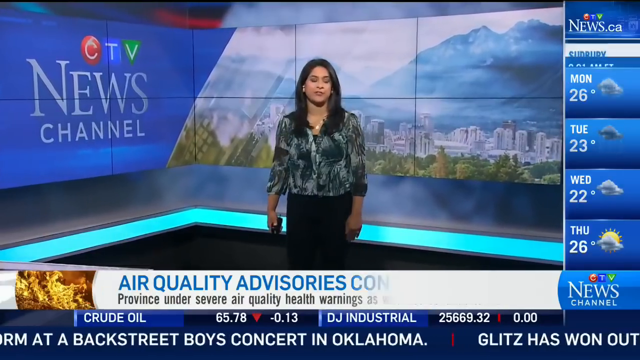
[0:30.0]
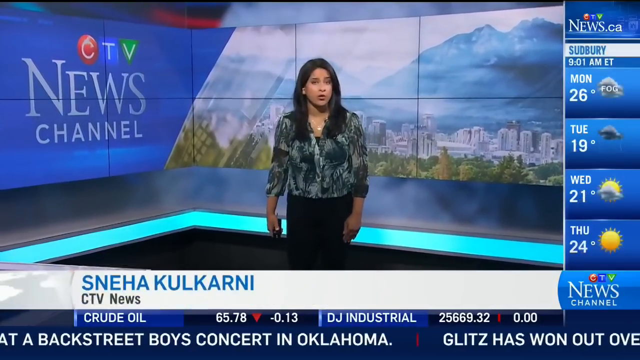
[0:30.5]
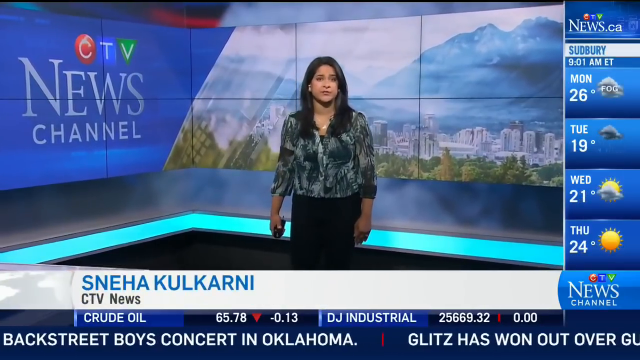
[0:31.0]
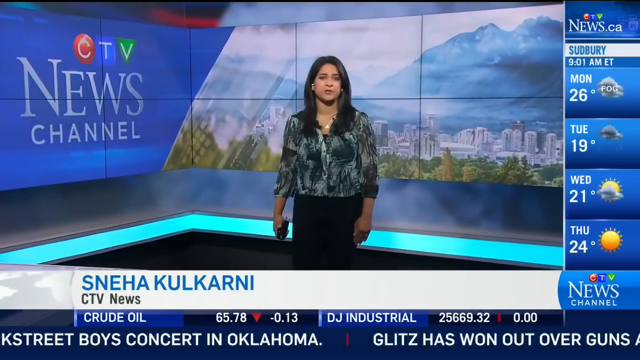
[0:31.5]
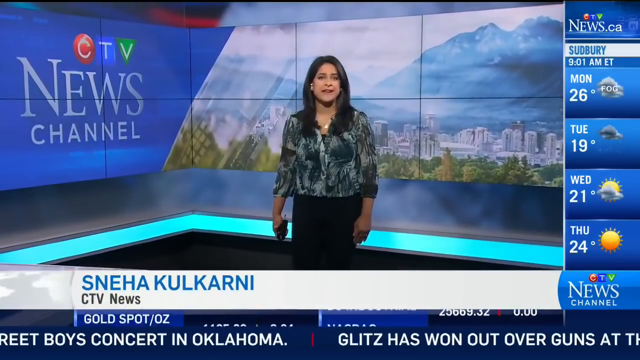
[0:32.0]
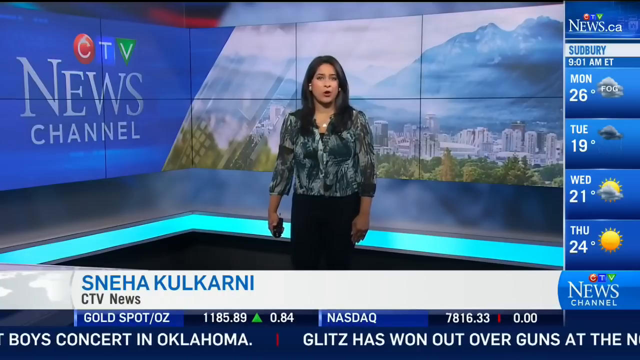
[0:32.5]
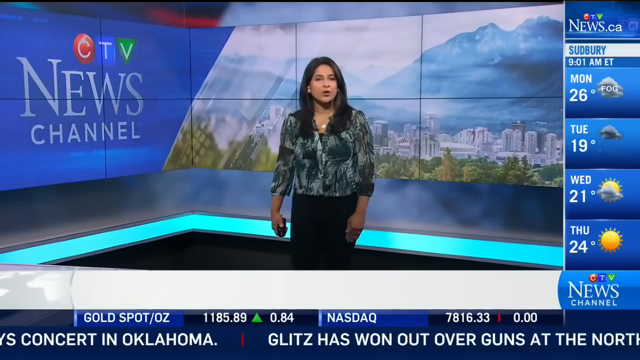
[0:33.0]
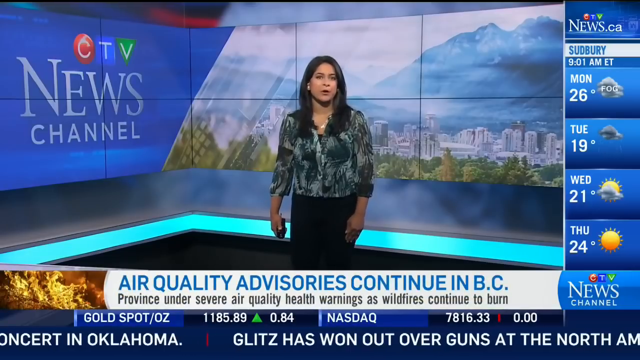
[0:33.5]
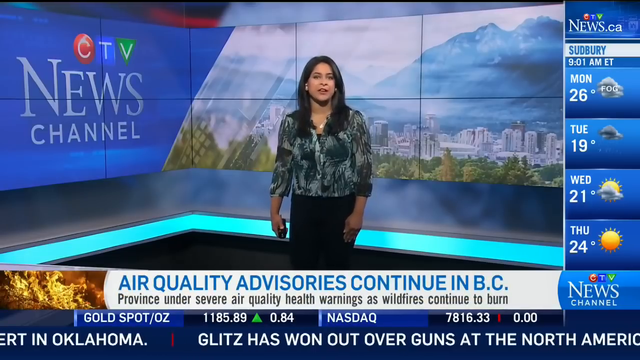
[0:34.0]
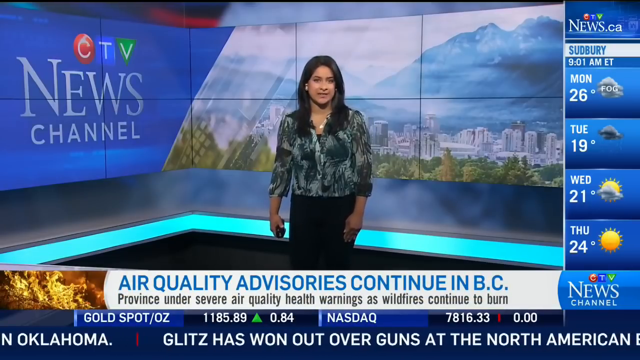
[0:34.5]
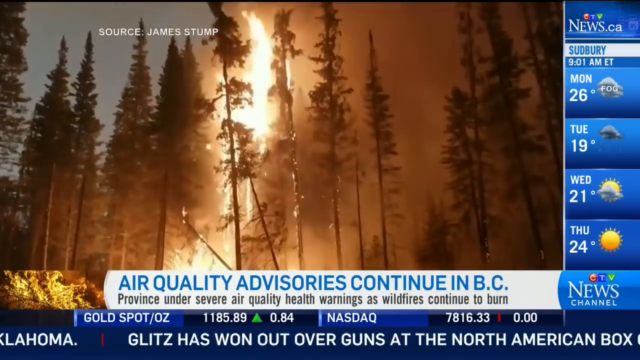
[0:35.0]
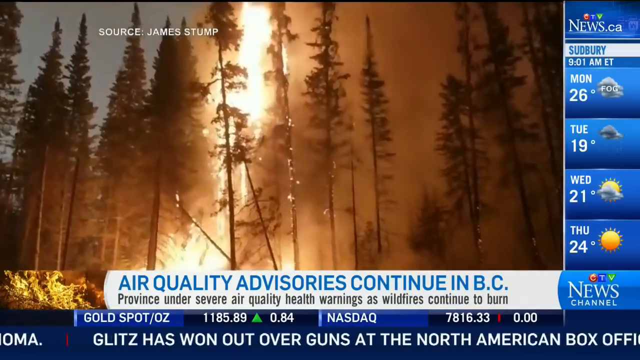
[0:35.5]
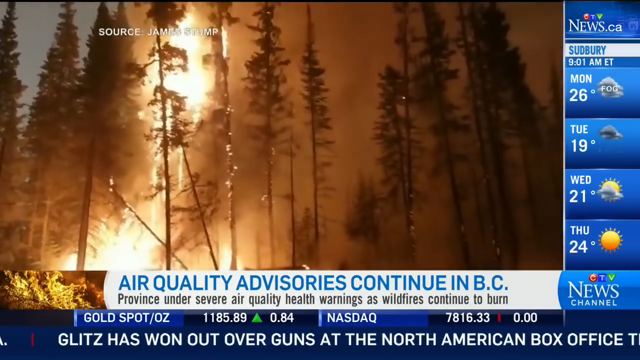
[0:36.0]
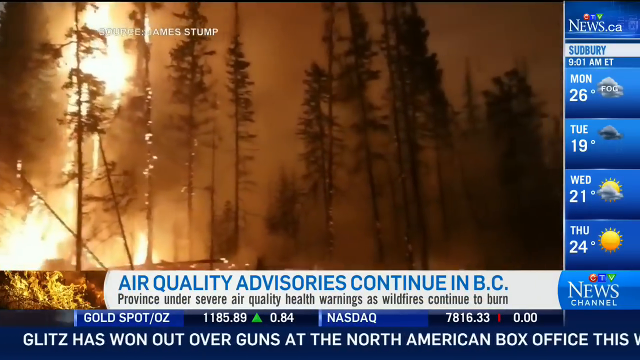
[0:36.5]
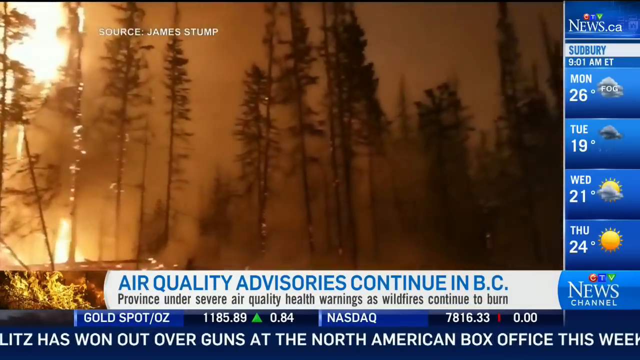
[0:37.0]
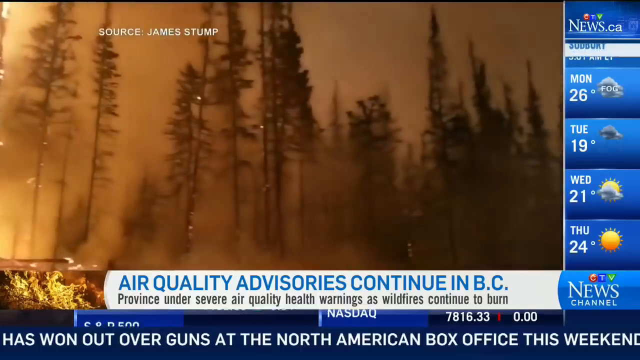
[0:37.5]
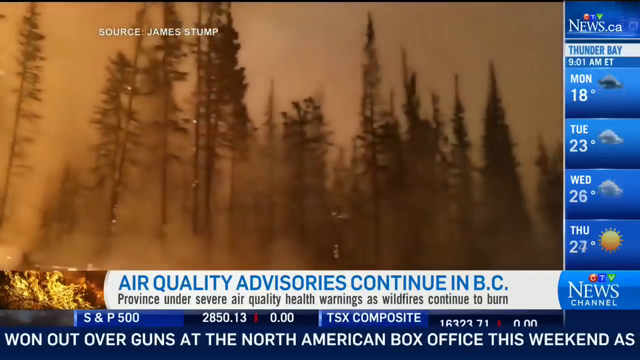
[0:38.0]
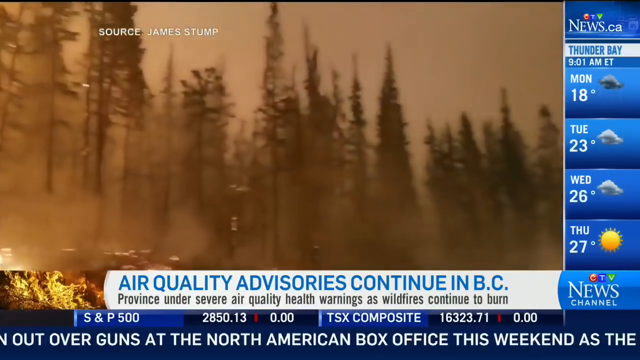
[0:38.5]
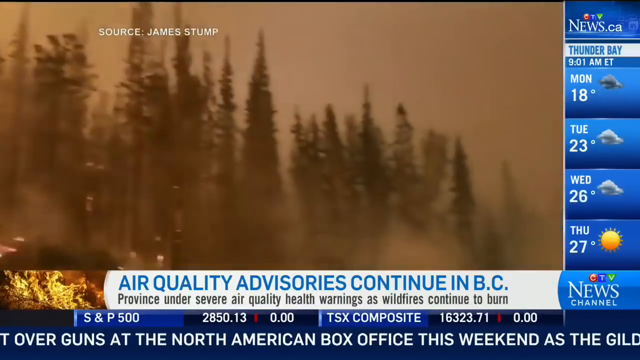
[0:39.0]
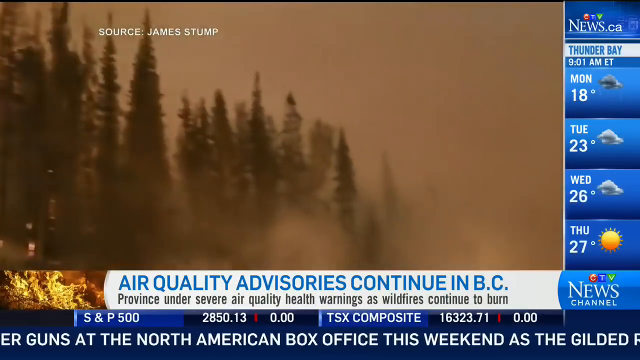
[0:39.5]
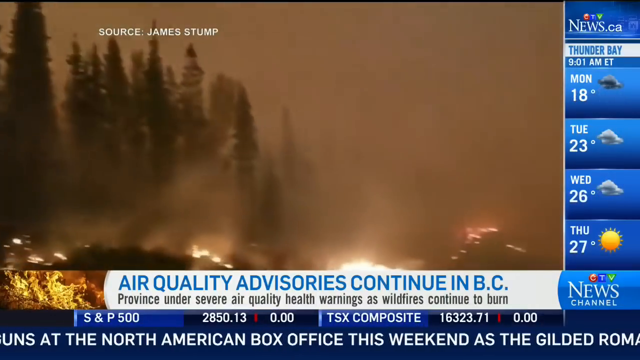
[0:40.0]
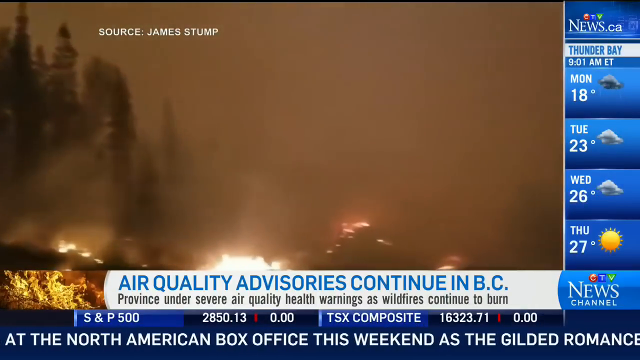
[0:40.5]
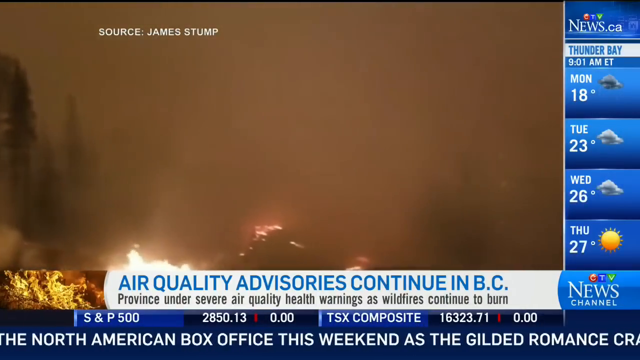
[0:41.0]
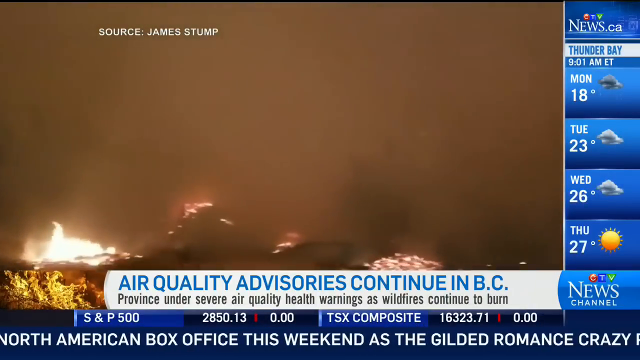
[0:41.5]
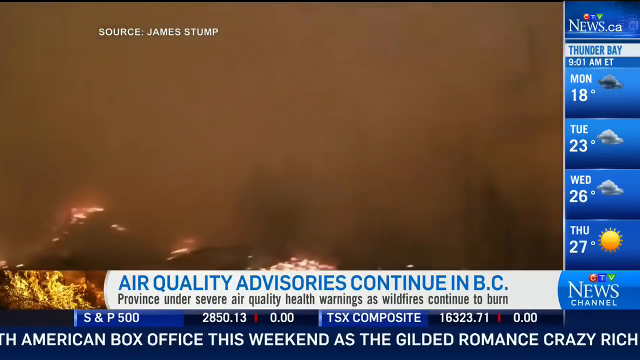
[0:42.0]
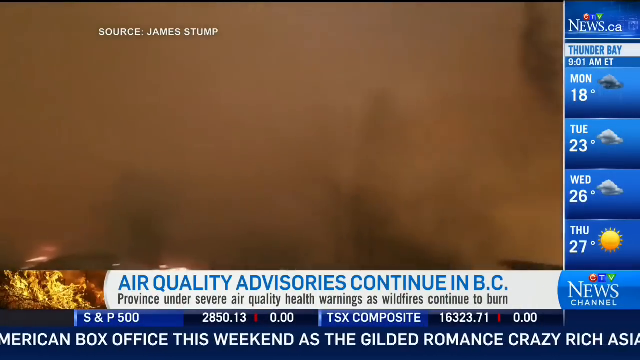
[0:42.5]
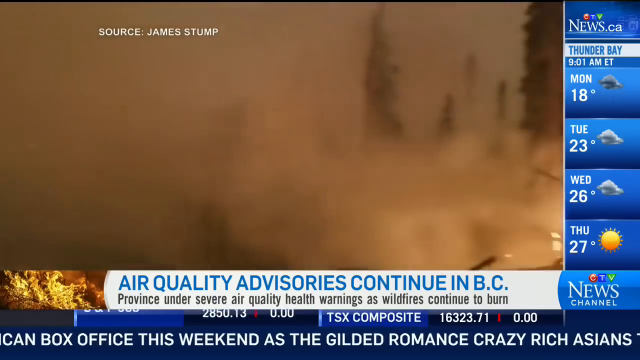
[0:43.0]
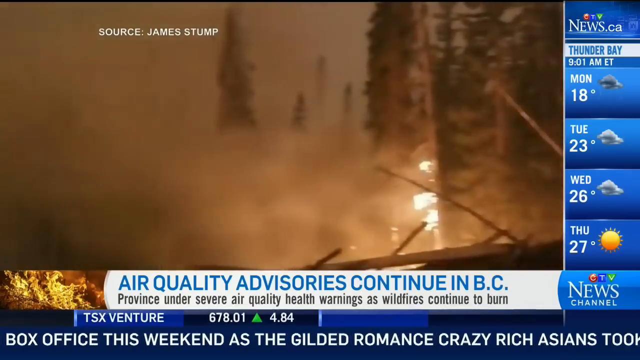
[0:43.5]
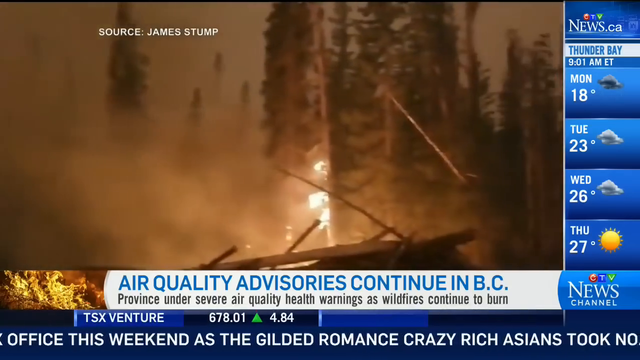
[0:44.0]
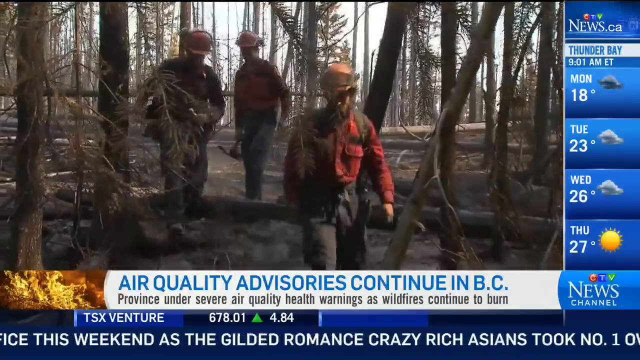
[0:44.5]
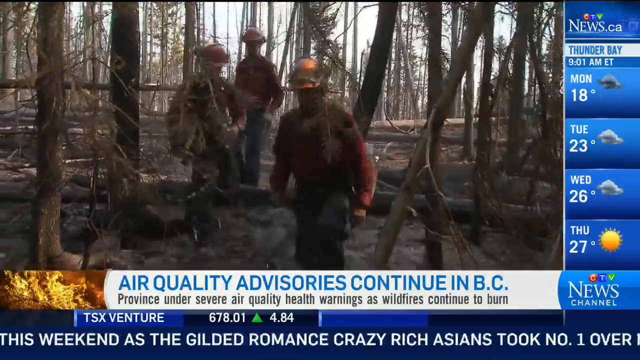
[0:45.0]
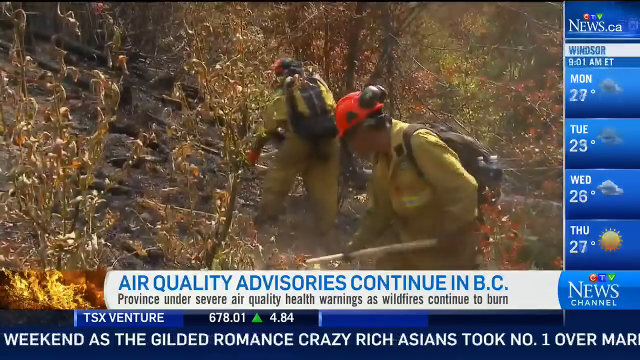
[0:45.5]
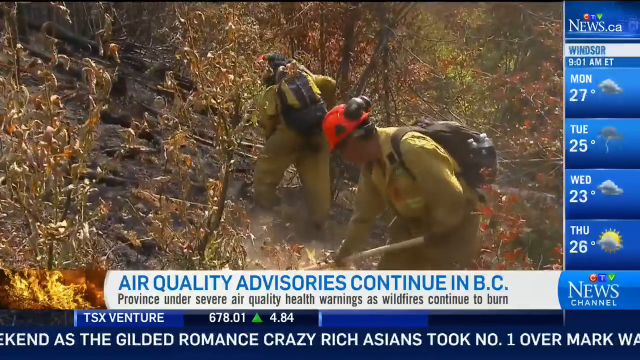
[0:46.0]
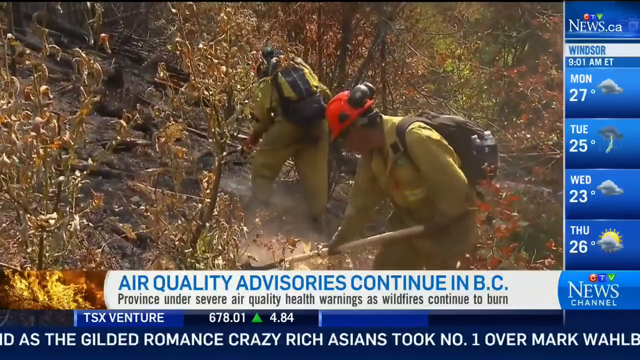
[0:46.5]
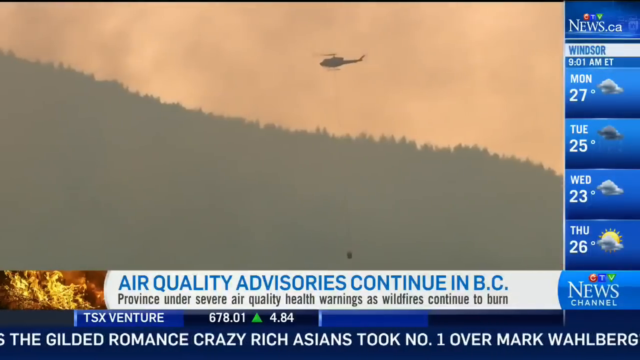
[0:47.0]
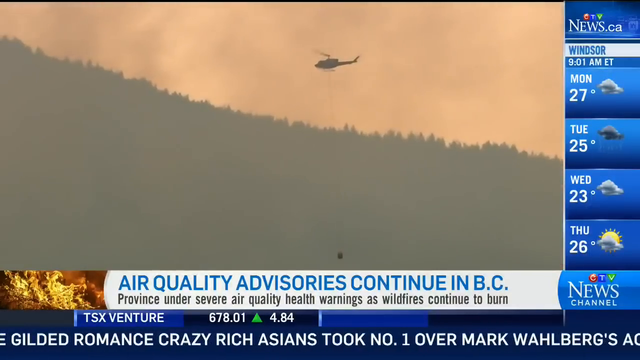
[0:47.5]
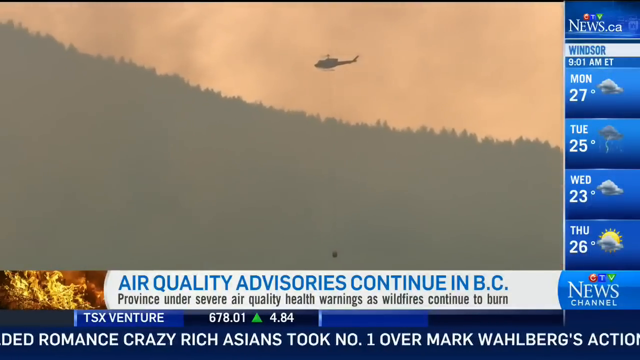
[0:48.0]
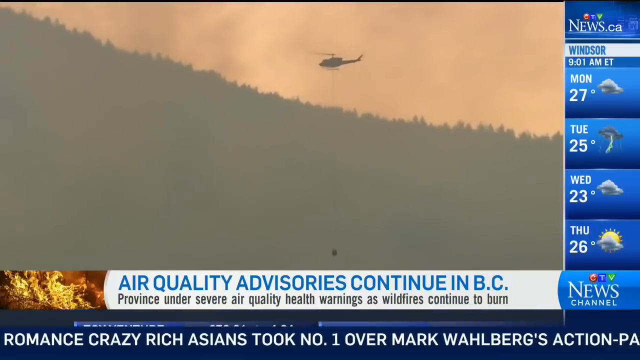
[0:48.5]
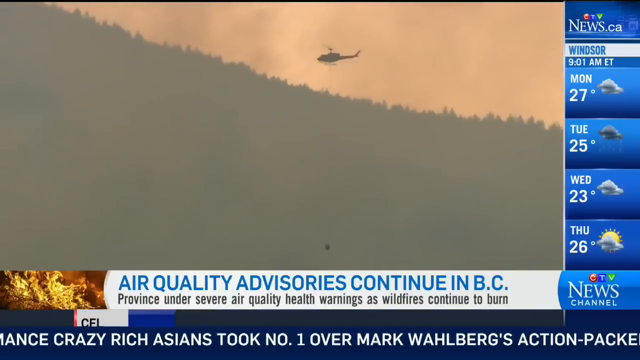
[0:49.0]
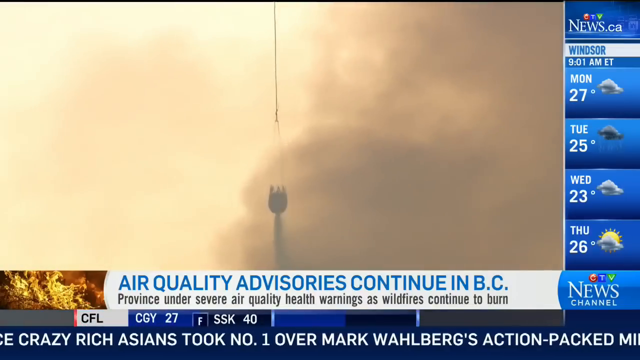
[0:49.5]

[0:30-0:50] The right section shows the weather in Toronto: Monday 26 and cloudy, Tuesday 23 and cloudy, Wednesday 22 degrees and cloudy, Thursday 26 degrees and partly sunny. It changes to Sudbury: Monday 26 degrees, cloudy and foggy; Tuesday 19 degrees, cloudy; Wednesday 21 degrees, partly sunny; Thursday 24 degrees, sunny. The news shows a wildfire in a forest. The forest is covered in smoke and the trees are burning; even the tall trees have caught fire. Firefighters navigate the forest, where some trees have been cut down; some wear heat-resistant clothes and carry backpacks, and they dig the ground. A helicopter flies by the smoky forest and uses a bucket to drop water onto it to try to slow the fire.